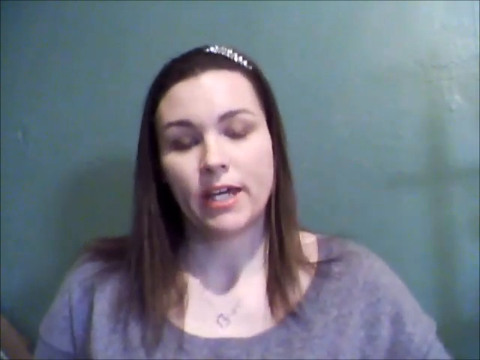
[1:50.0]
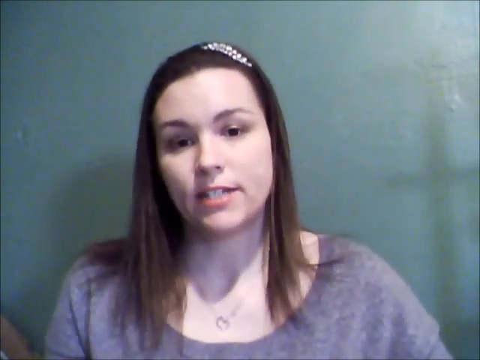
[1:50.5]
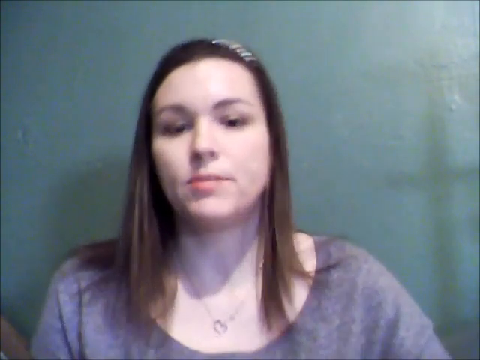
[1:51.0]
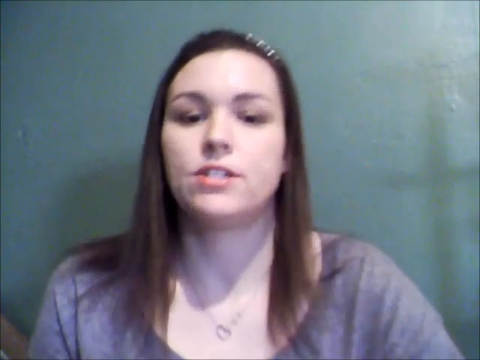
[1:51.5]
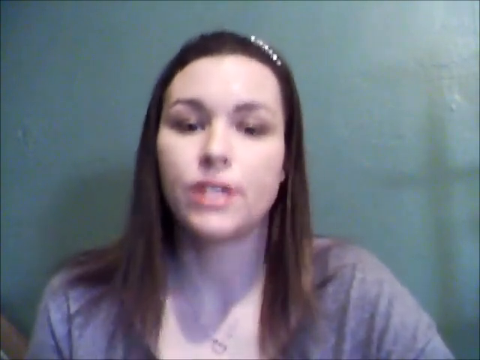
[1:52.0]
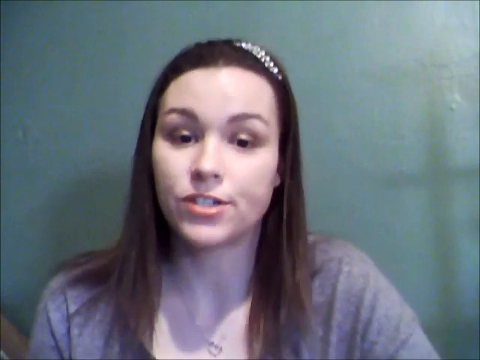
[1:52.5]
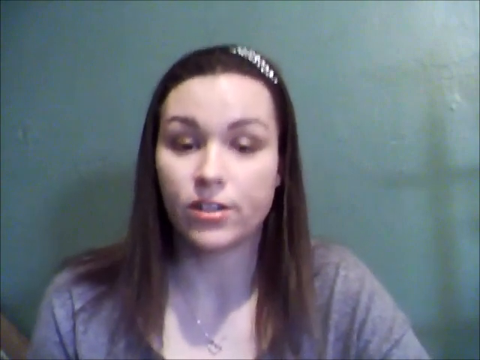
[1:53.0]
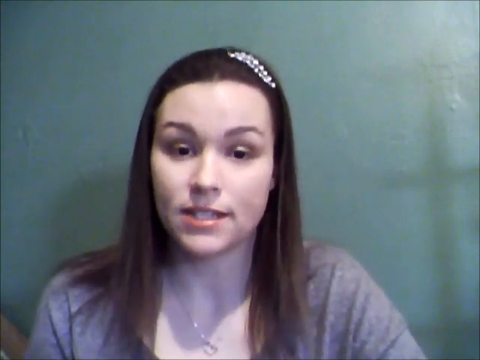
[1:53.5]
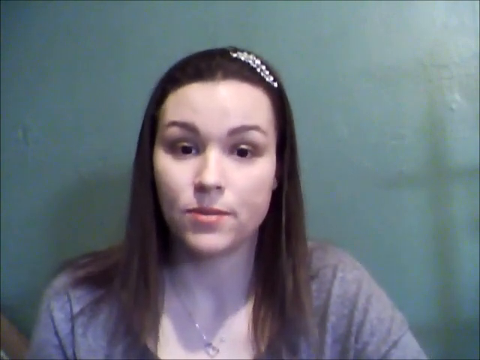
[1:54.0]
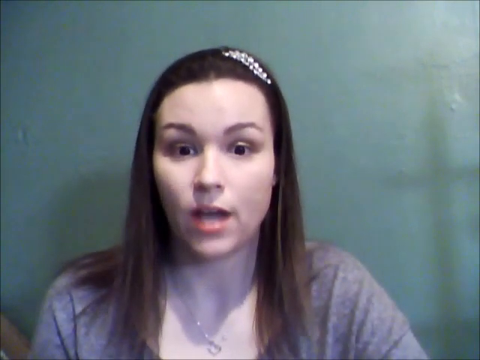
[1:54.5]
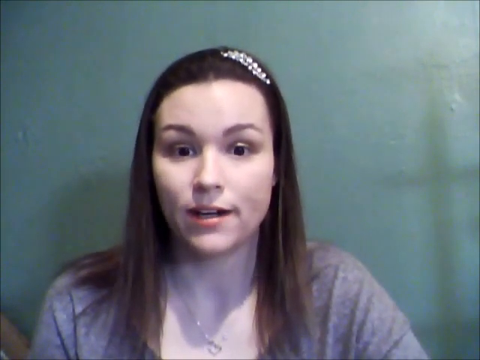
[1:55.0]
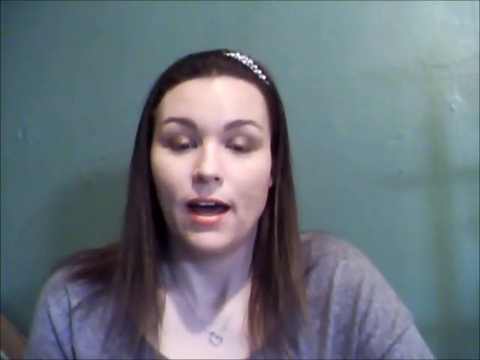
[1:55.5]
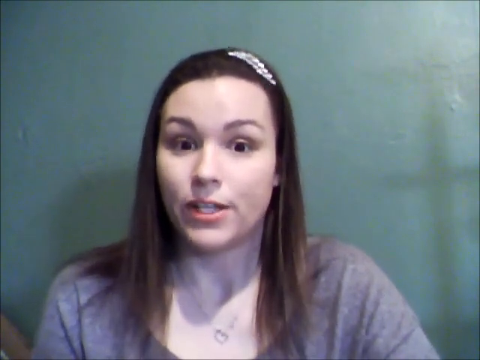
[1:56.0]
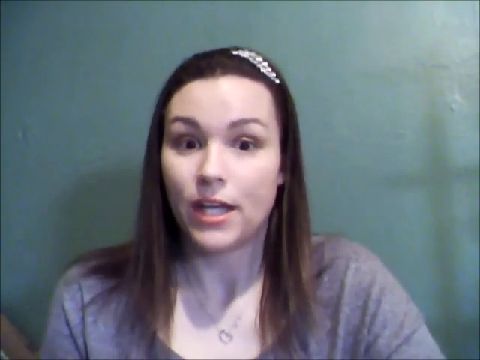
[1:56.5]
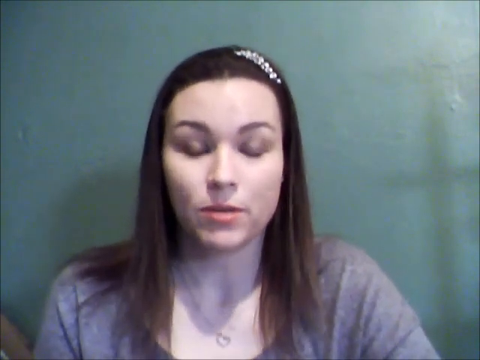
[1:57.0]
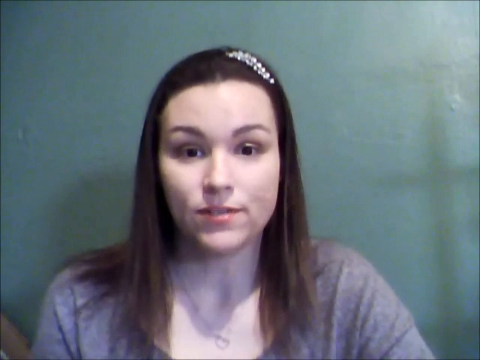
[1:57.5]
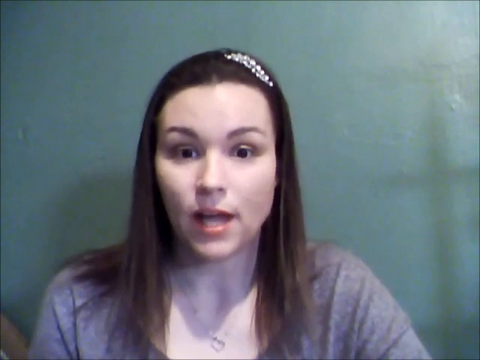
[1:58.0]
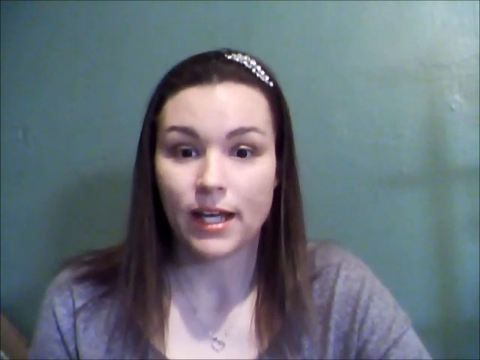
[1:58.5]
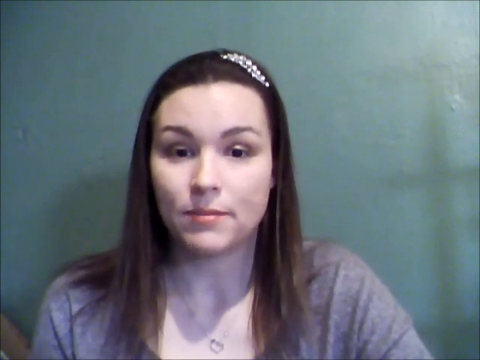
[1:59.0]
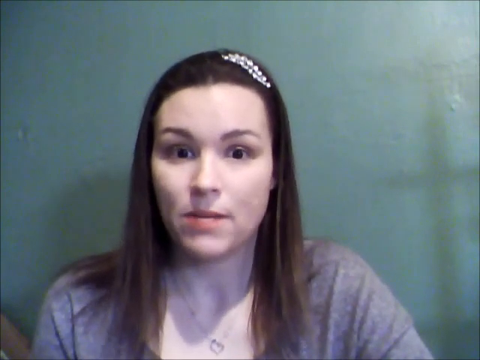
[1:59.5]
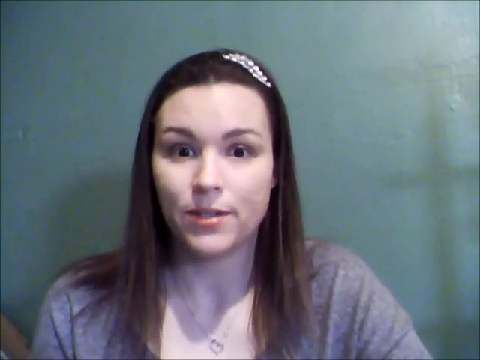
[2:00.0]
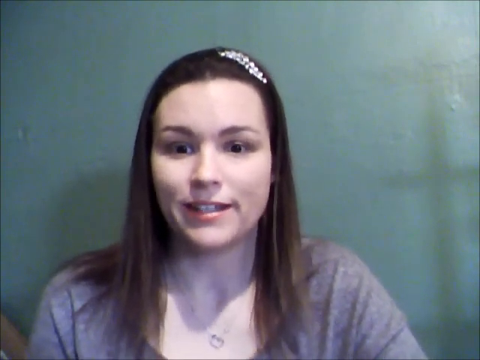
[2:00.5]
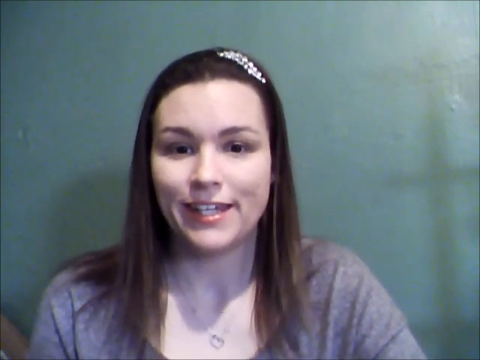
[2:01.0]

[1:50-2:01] The shot is focused on the woman, framed from just above her chest, with everything below cut off. She wears a kind of loose-fitting gray shirt, has brown hair down past her shoulder, very light makeup, and brown eyes. She looks straight ahead with her head tilted slightly to the left, then leans forward a little, her right shoulder coming forward more than the other, and then moves back. Her eyes open very wide as she talks, and she keeps staring directly at the camera. Her top two front teeth stick out a little more than the rest, and her bottom teeth show as she talks. Her eyes go very wide again, and she gives a little smile at the end.